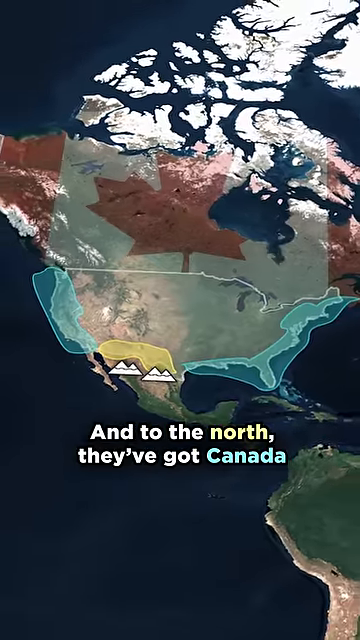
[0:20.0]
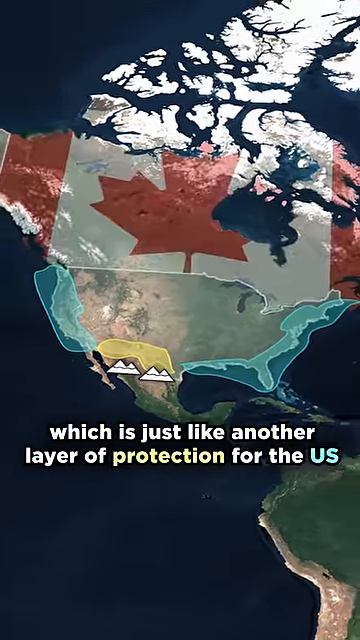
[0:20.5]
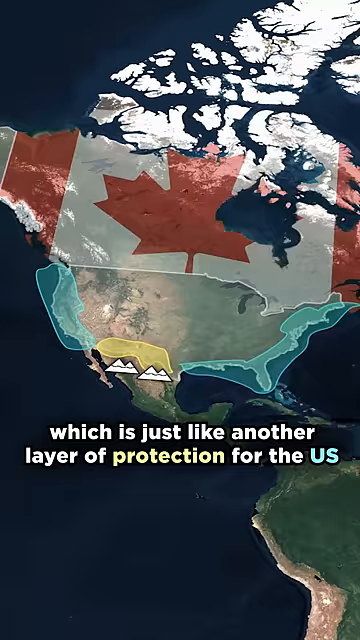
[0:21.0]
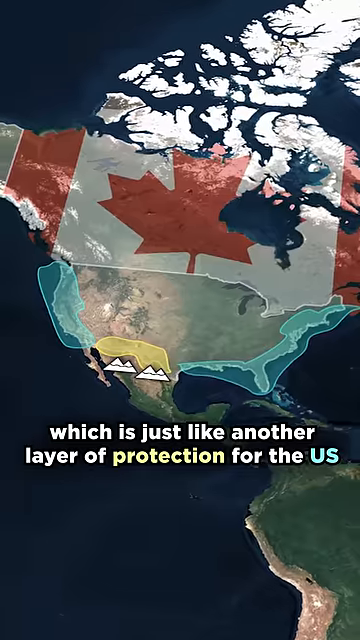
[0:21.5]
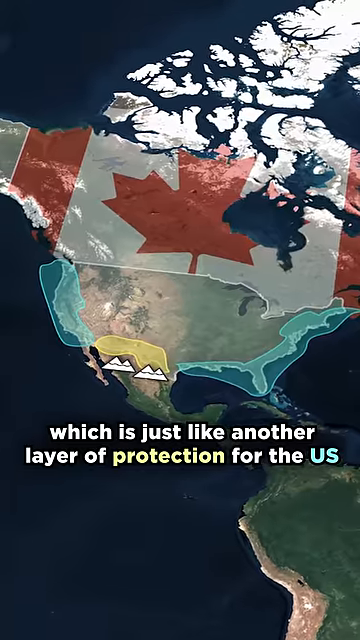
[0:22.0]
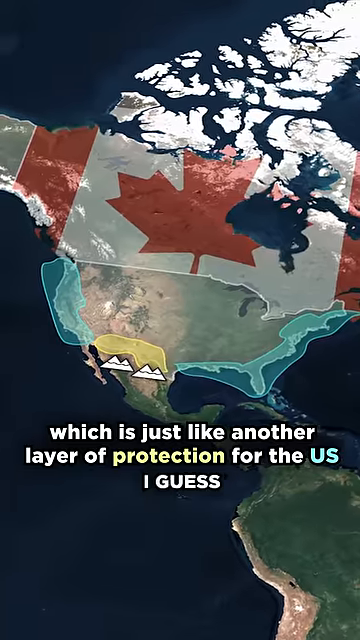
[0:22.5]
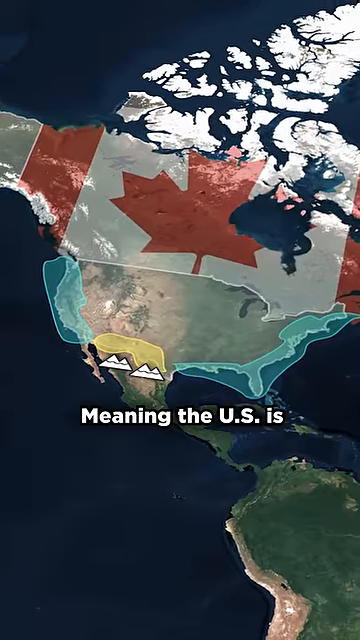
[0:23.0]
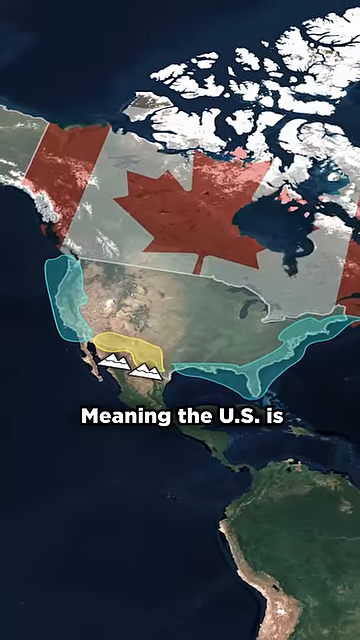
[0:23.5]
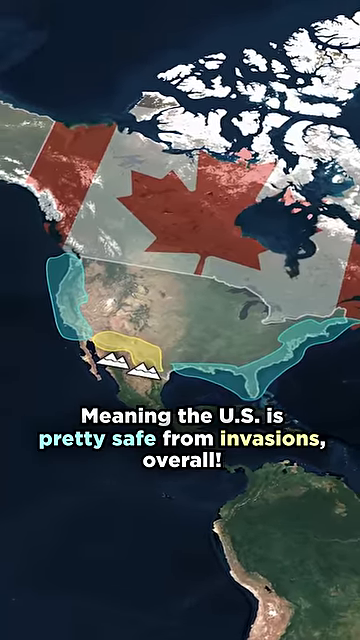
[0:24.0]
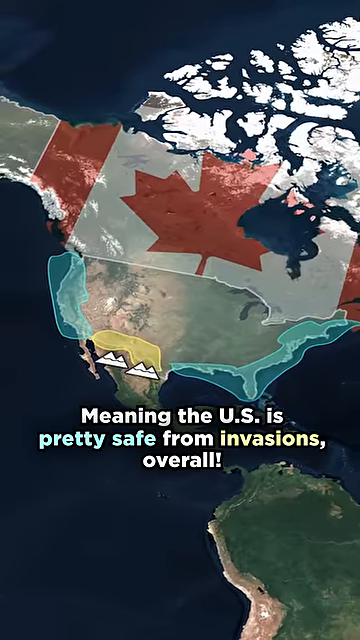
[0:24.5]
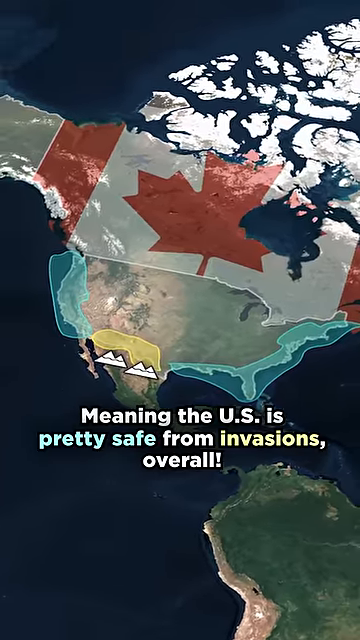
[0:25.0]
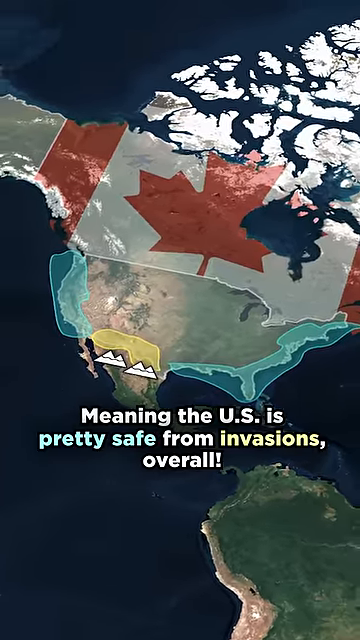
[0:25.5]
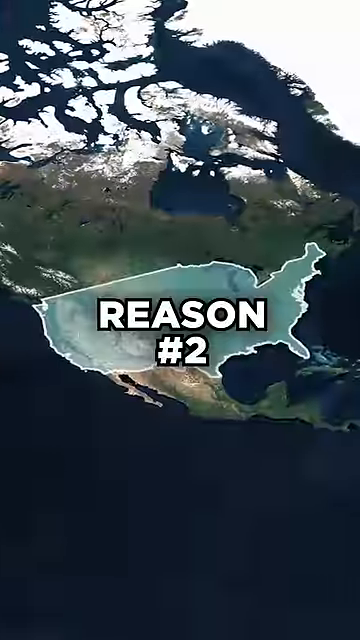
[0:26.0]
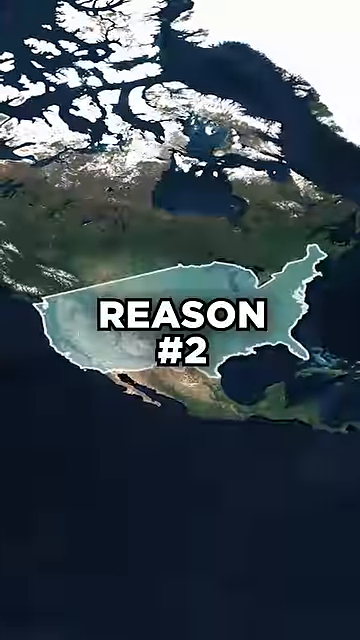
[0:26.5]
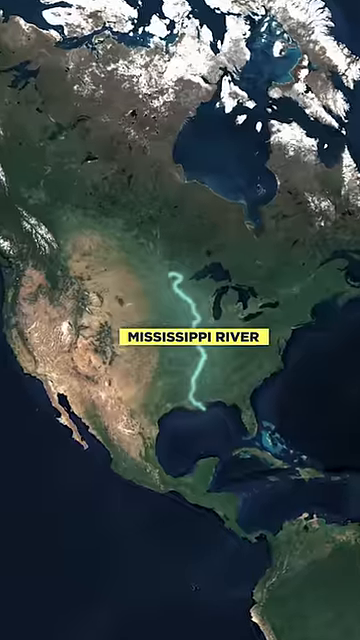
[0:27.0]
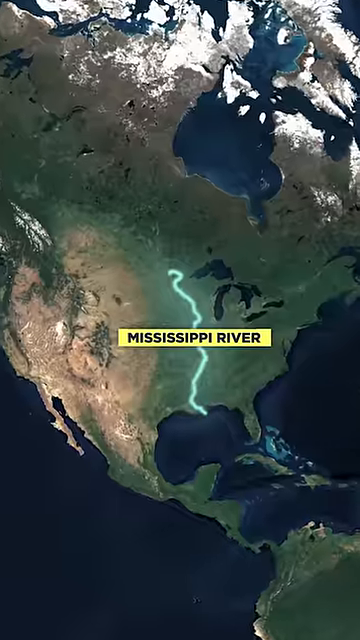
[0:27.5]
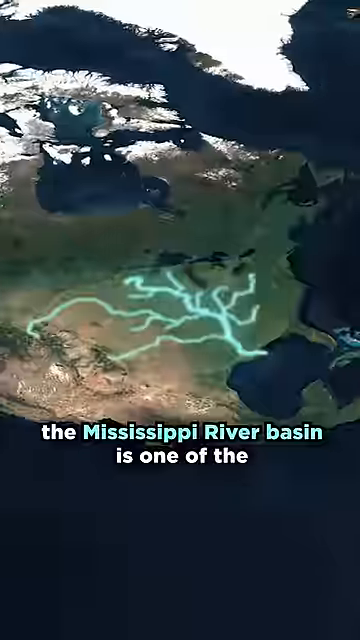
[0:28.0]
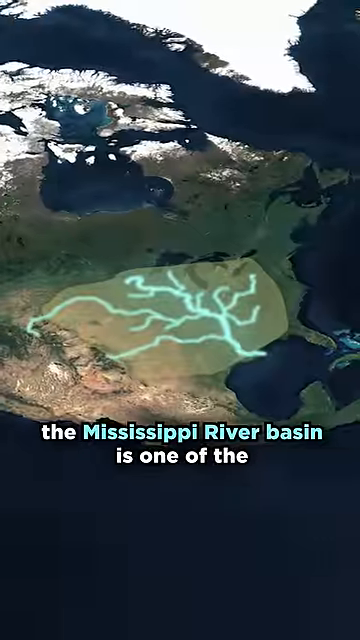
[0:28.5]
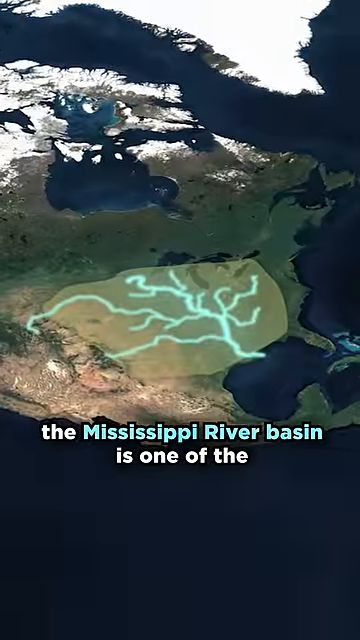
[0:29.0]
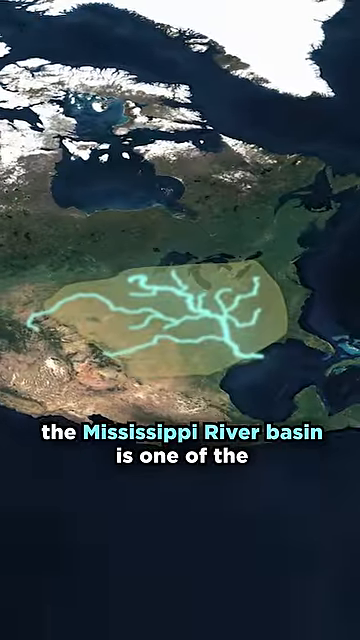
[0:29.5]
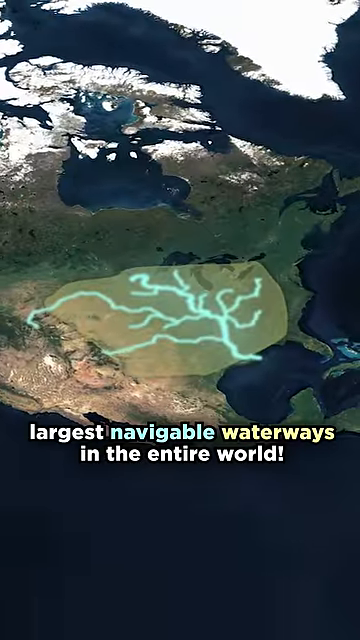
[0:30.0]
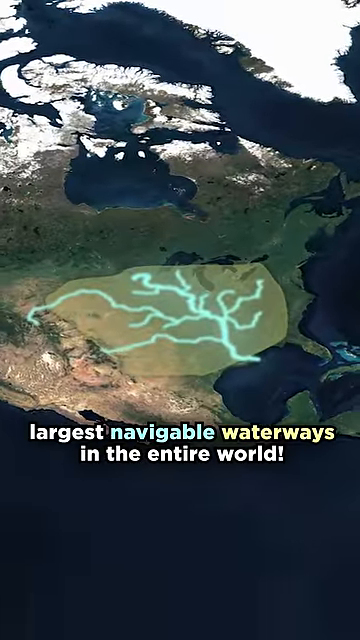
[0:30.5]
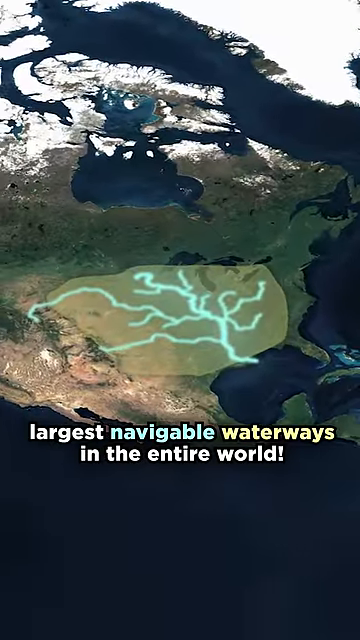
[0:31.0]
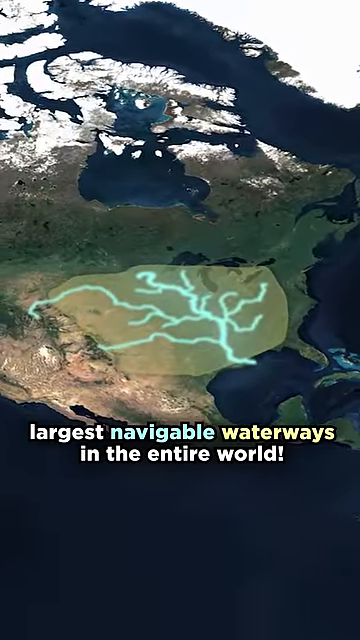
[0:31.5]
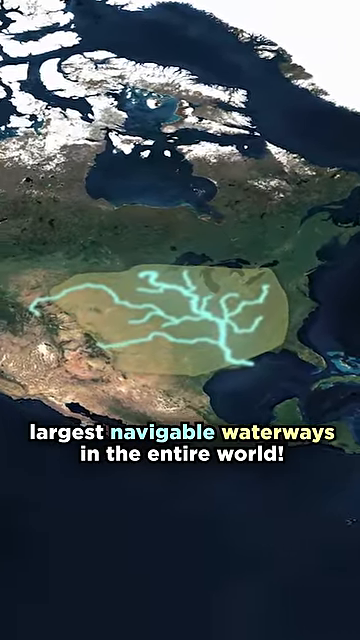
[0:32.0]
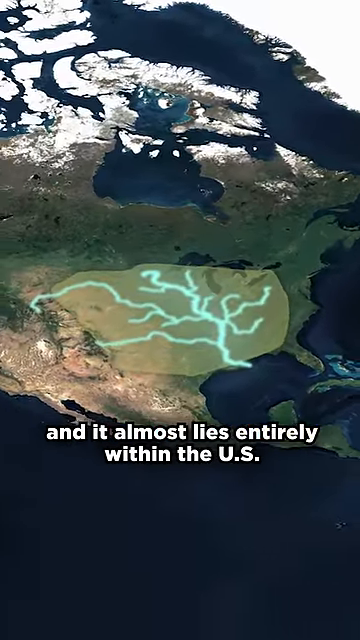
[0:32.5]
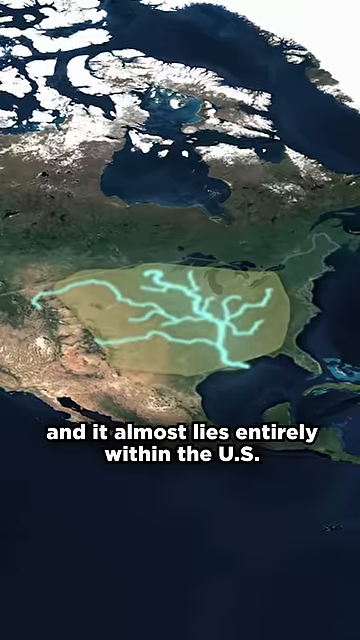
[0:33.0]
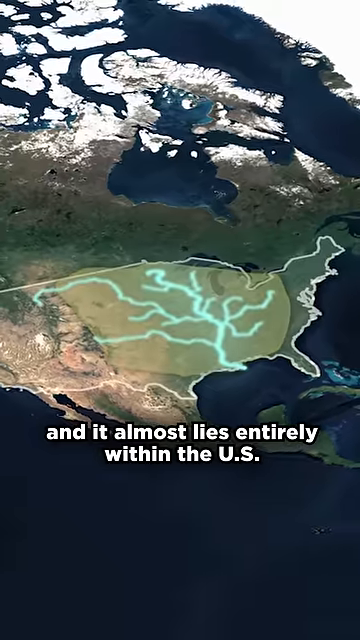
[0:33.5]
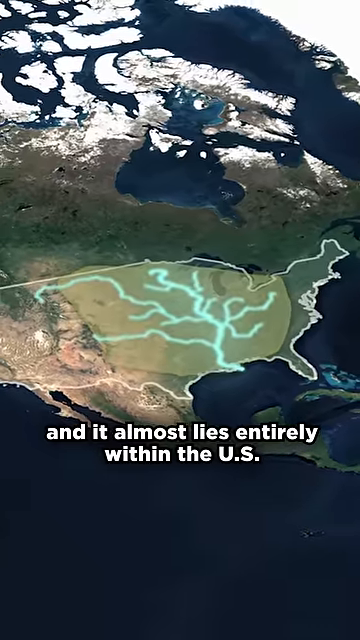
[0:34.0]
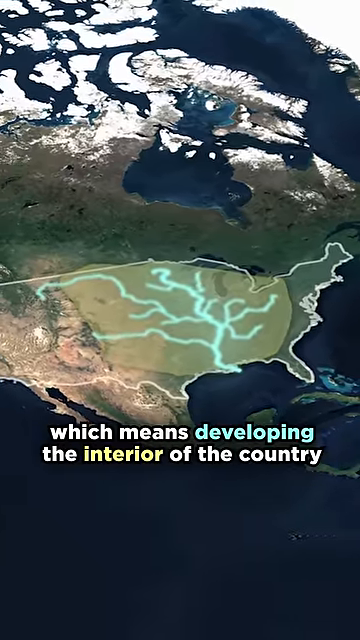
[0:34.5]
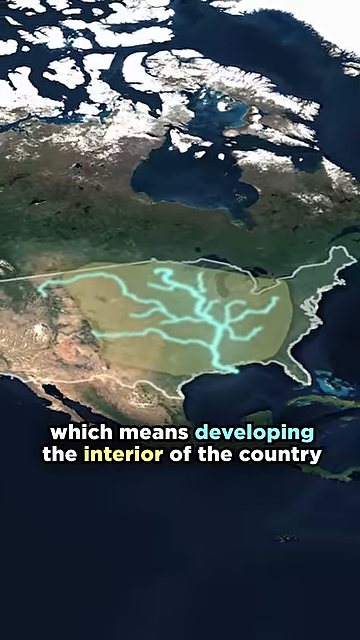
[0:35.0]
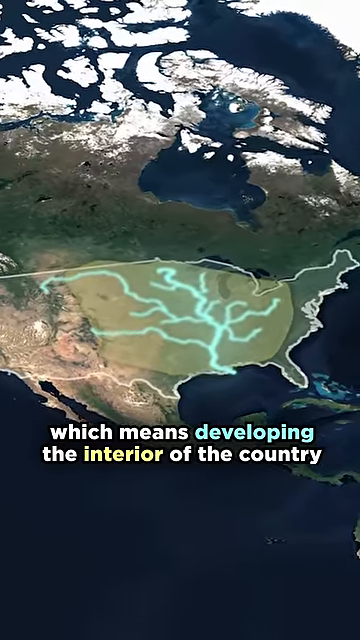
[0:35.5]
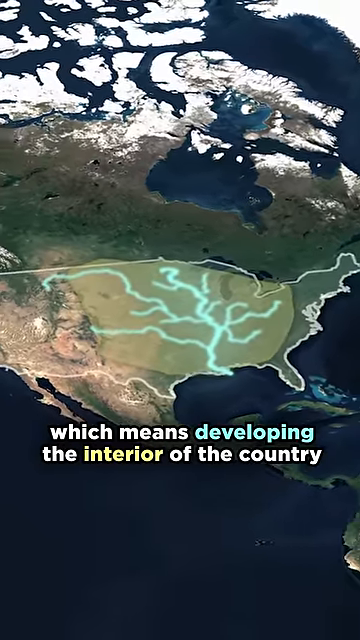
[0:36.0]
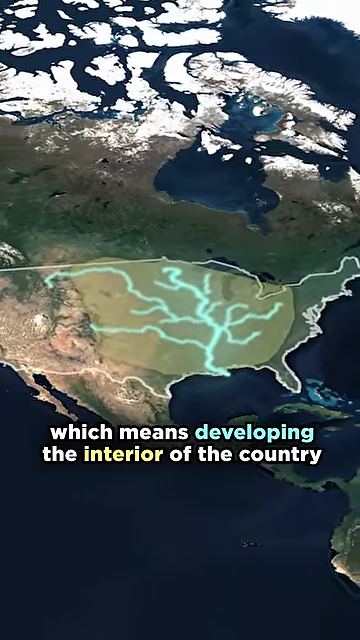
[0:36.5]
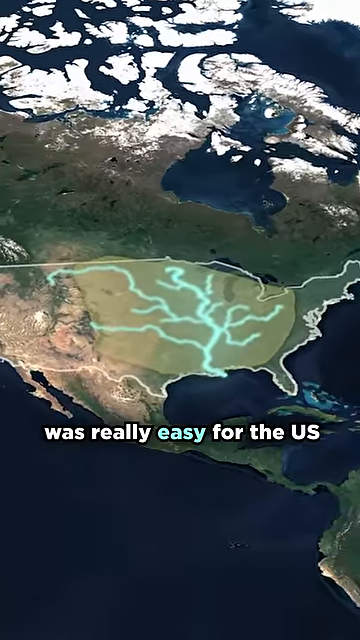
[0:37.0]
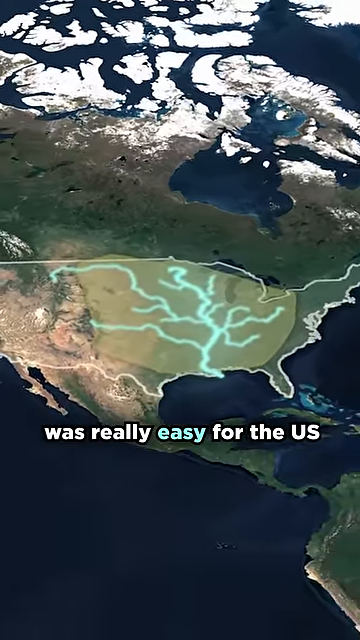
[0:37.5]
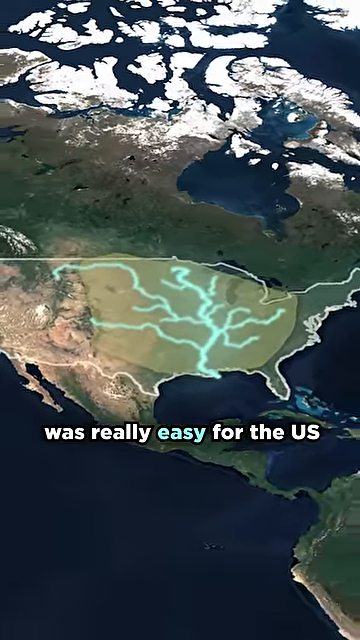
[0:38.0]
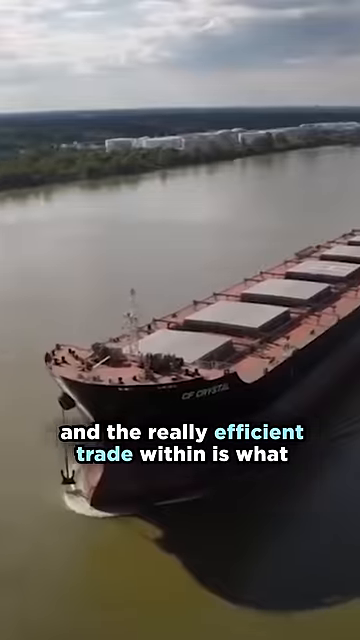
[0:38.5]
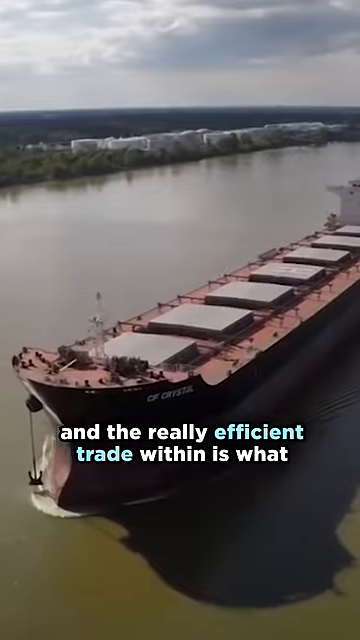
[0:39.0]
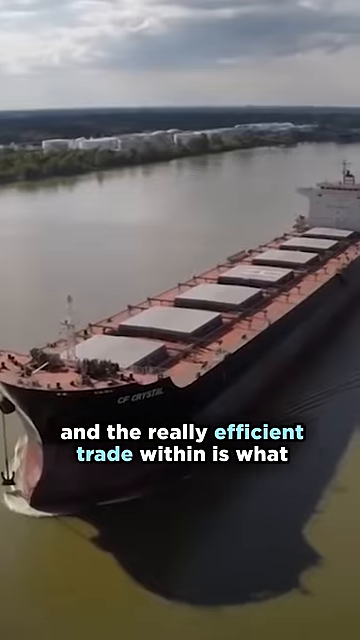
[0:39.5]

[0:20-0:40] At the beginning of the scene, there is an outline of Canada with a Canadian flag imposed on the map of Canada, over the United States. The focus is entirely on the two countries, Canada and the United States. A map of the various rivers of the United States is shown. The camera rotates. The text is white, and it also appears in a number of different colors, from yellow to white to blue. At the end of the scene, the view changes to a real image of a body of water with a boat on top of the water.